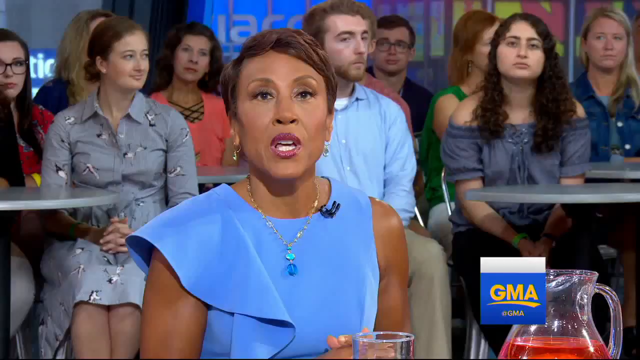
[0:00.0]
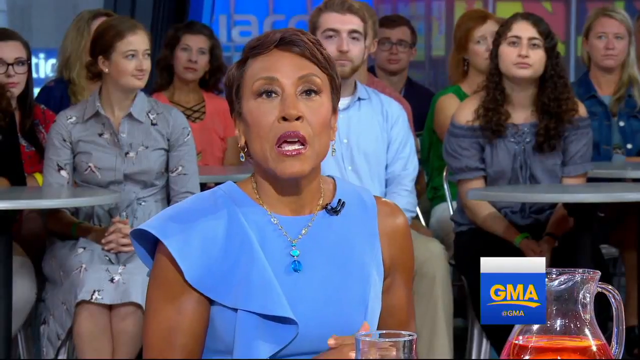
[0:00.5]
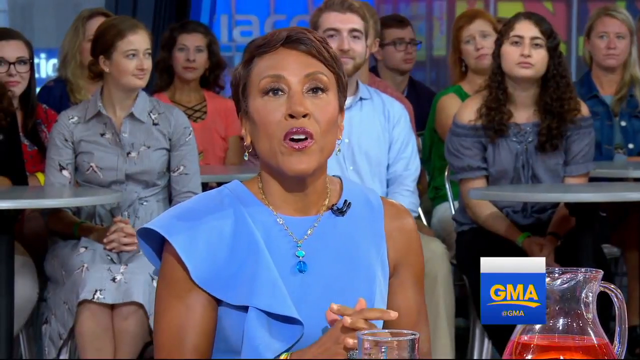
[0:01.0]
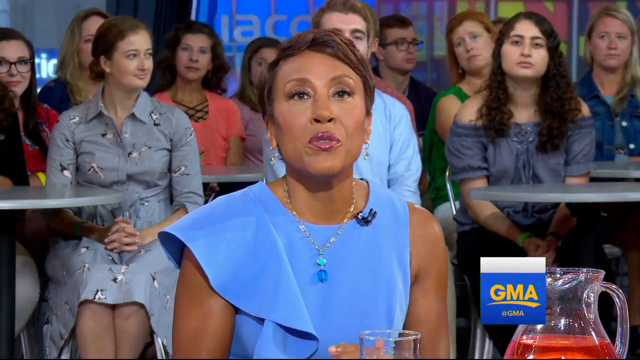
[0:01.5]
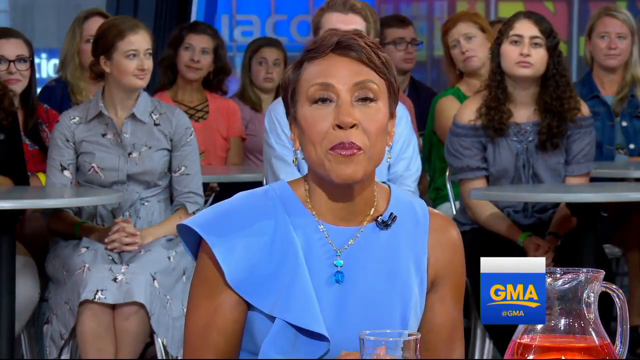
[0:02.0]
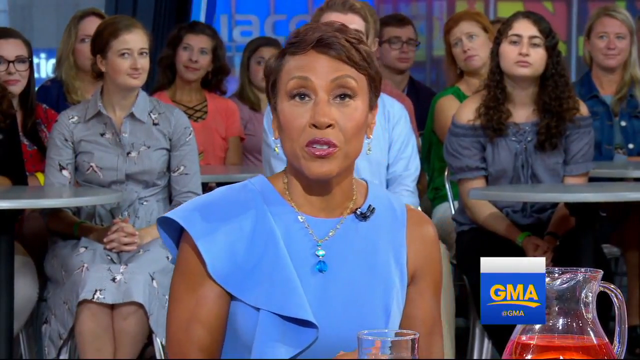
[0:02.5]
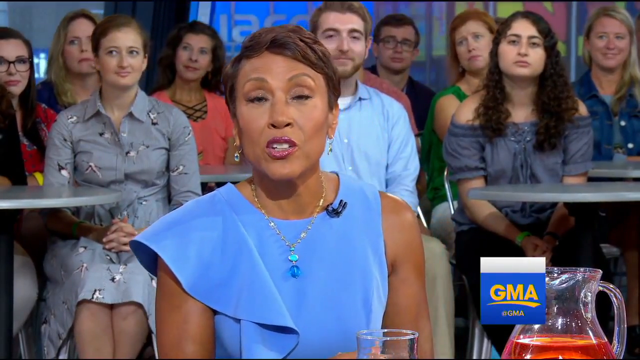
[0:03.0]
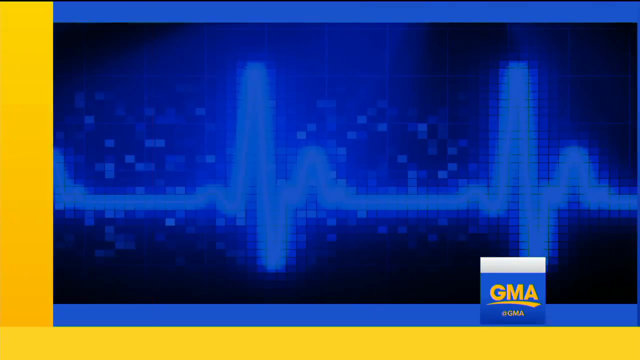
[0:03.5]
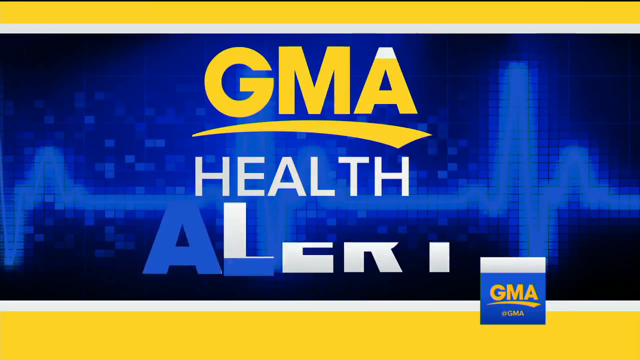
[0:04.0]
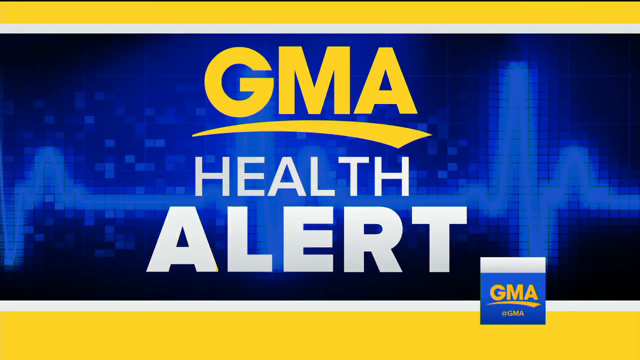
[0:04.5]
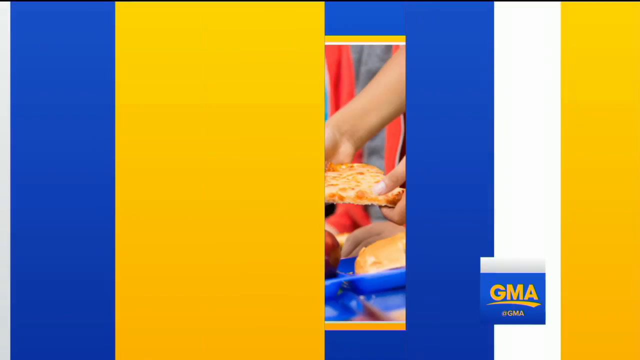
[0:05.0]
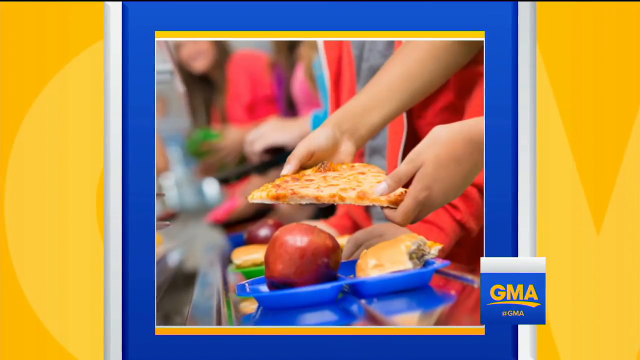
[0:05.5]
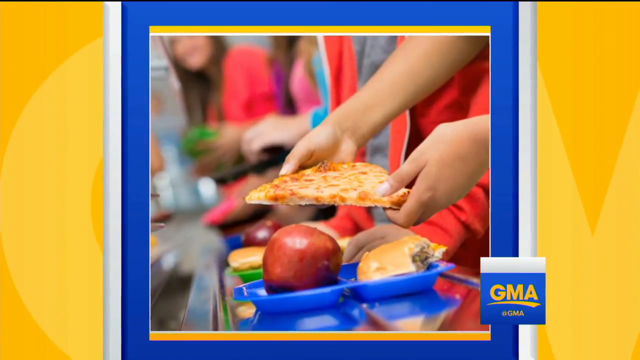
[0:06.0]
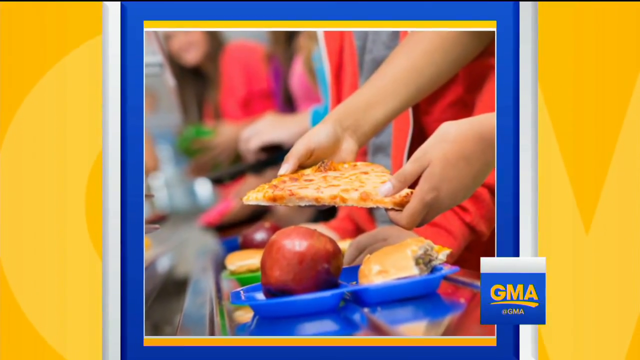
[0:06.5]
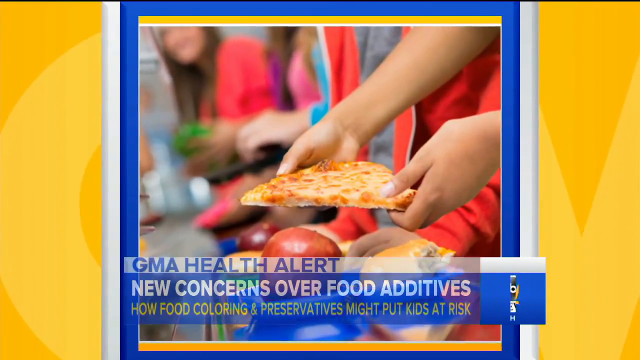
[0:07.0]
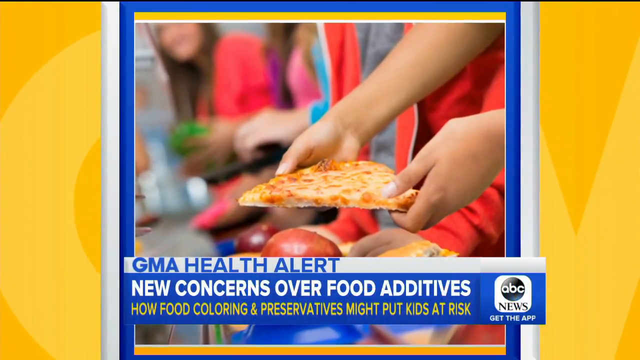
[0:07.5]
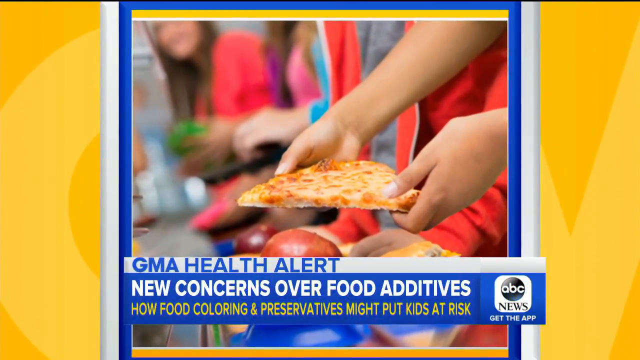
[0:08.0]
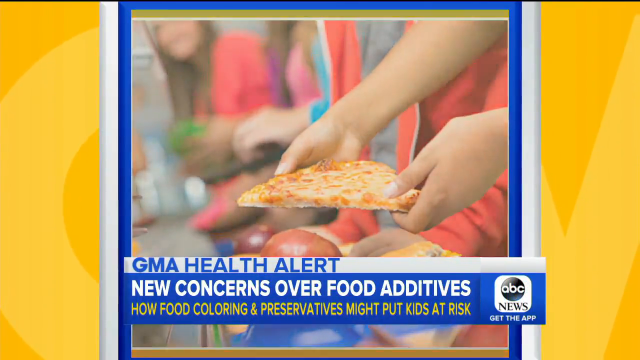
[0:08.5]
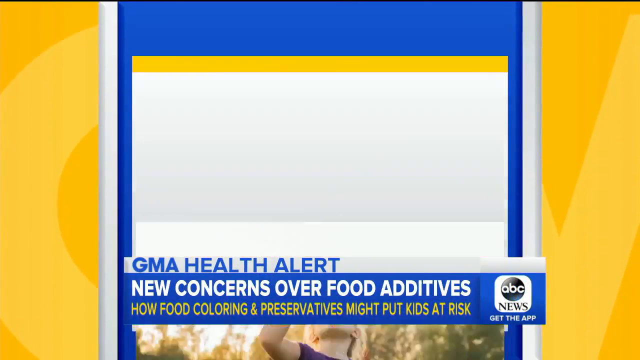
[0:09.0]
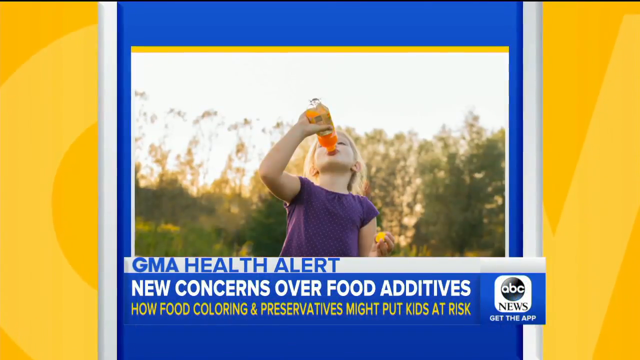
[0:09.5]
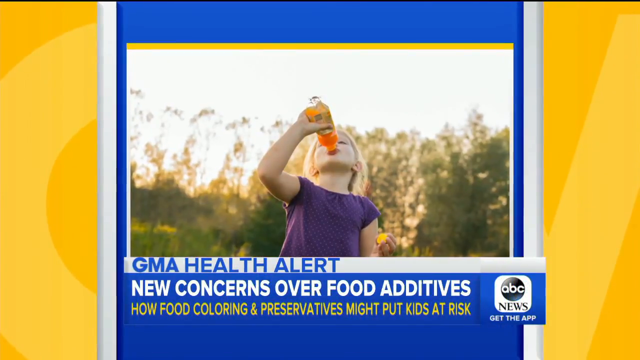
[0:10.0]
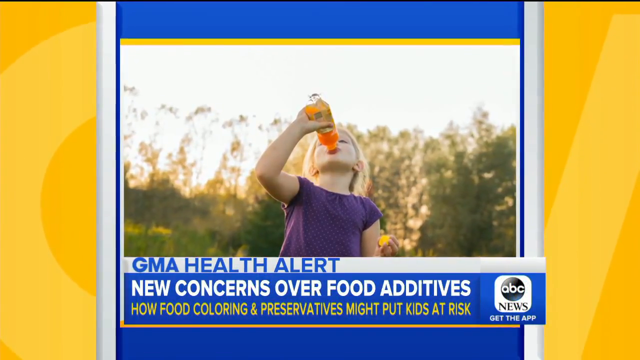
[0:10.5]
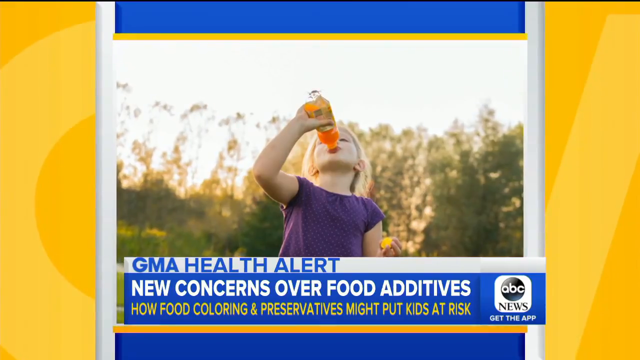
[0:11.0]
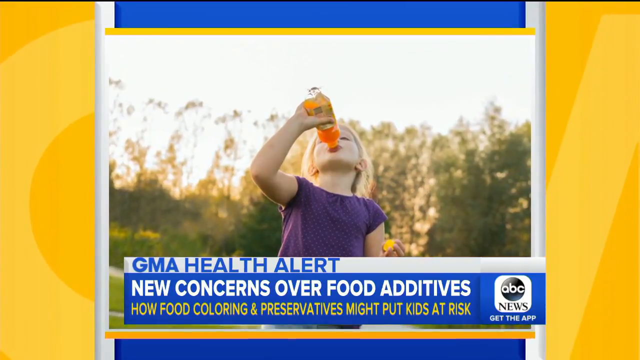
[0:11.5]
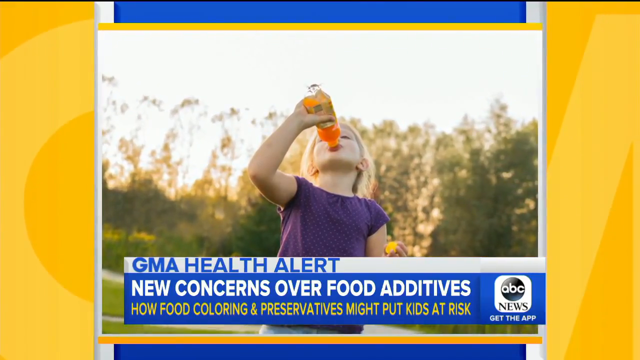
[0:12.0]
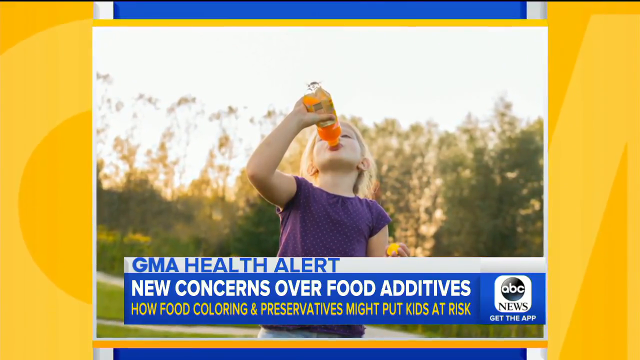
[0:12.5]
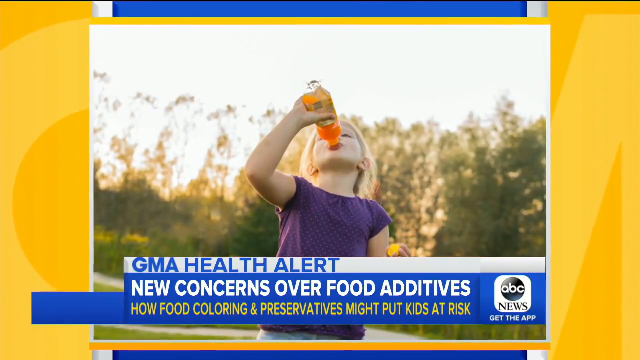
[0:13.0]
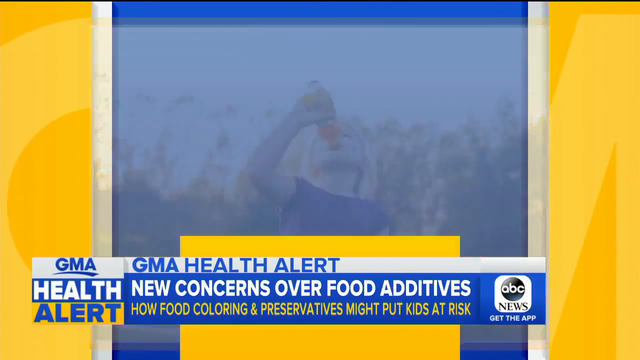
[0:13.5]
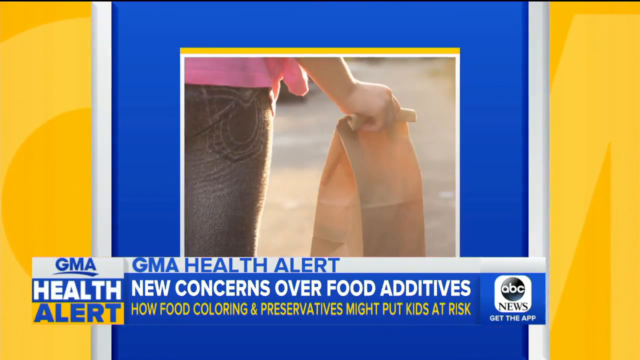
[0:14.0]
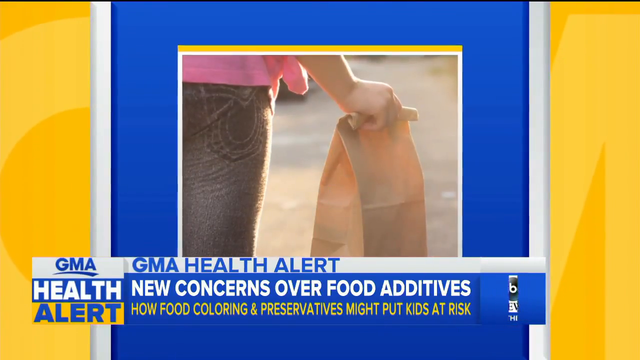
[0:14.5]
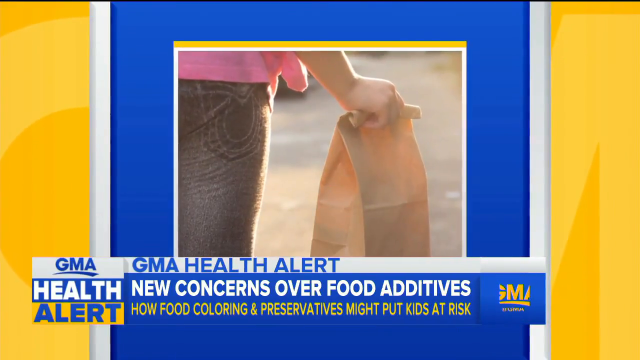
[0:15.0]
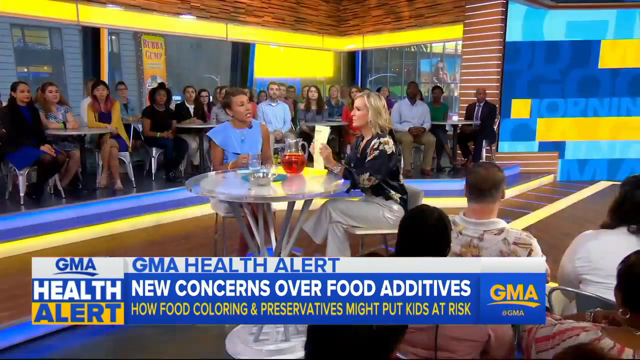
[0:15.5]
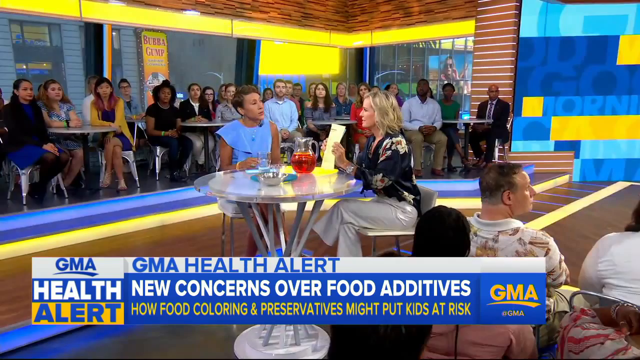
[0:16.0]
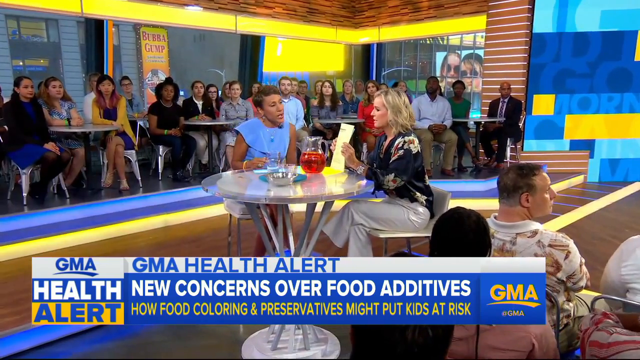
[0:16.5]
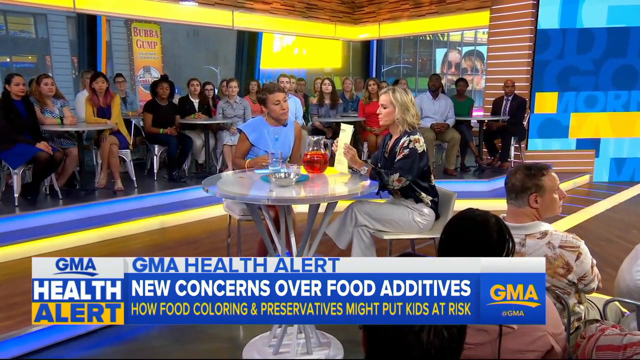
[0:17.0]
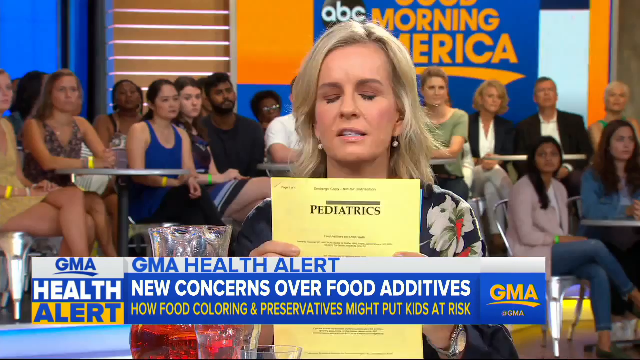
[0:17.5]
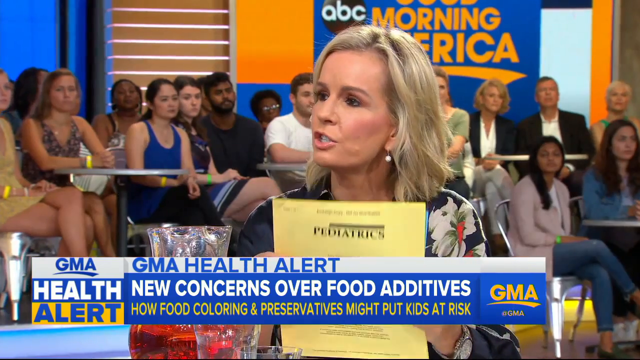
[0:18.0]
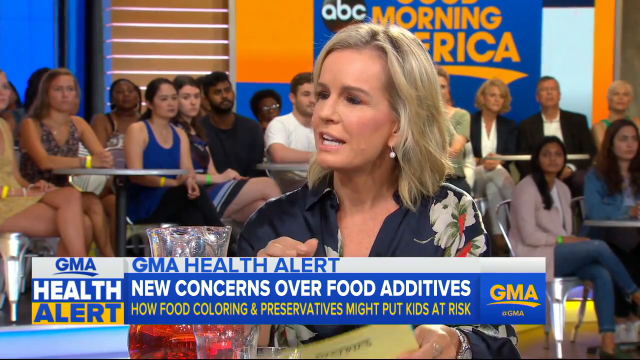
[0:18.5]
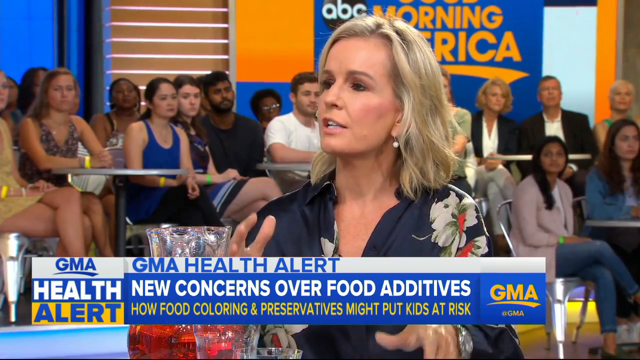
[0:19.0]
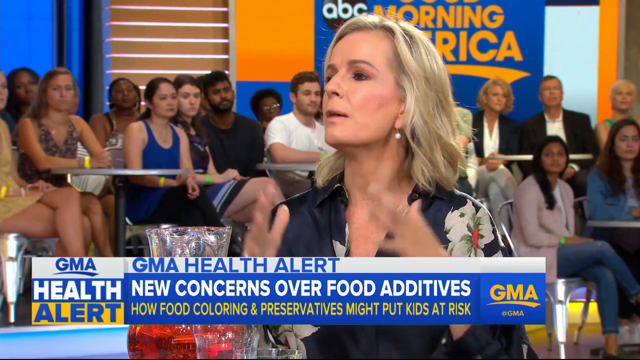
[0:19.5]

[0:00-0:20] A black woman with short hair in a type of pixie cut appears on screen. She wears bright purple lipstick, a pale blue top and a necklace, and a microphone is attached to the top of her top. In the background there are some tables with people sat around them, and a GMA logo is at the bottom of the screen. She talks toward the screen. The video then cuts to a GMA health alert graphic, and then to an image in a blue box with a white GMA logo behind it. The image shows what looks like a child's hands picking up a slice of pizza and putting it on what looks like a school lunch tray, with an apple also on the tray. Text comes up at the bottom of the screen: "GMA health alert, new concern over food additives, how food colouring and preservatives might put kids at risk." Next comes a picture of a child drinking bright orange juice from a bottle, then an image of somebody carrying a brown paper bag, with only their hand and body visible. The shot returns to the woman, now zoomed out in the studio, where she is at a silver table with another woman, a white woman with blonde hair who holds some papers and is talking.